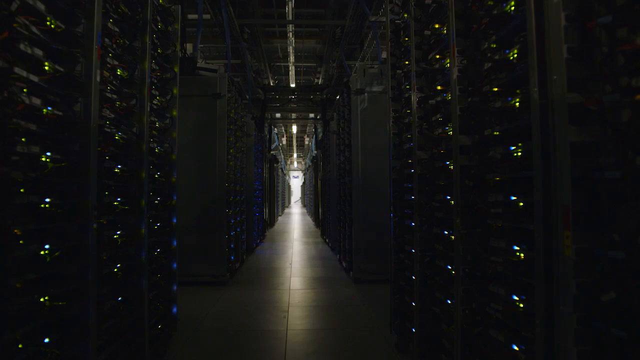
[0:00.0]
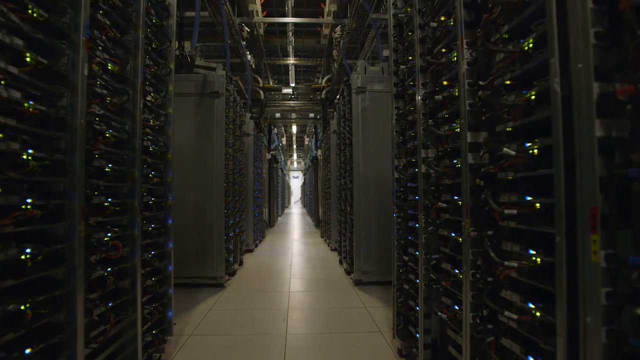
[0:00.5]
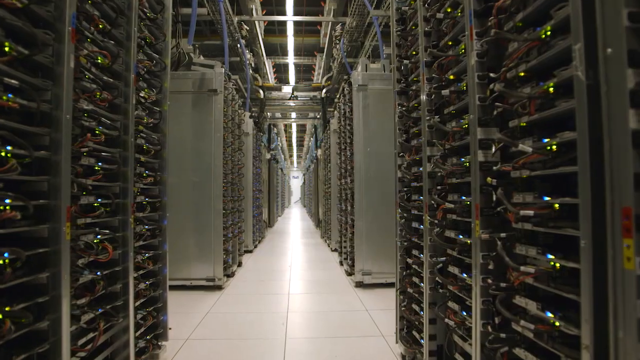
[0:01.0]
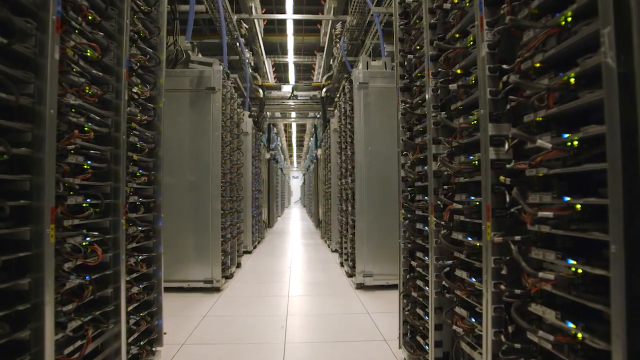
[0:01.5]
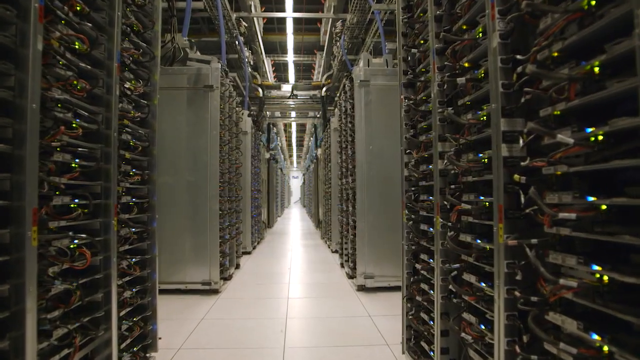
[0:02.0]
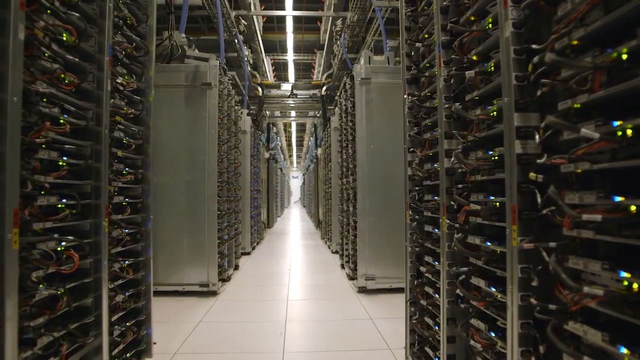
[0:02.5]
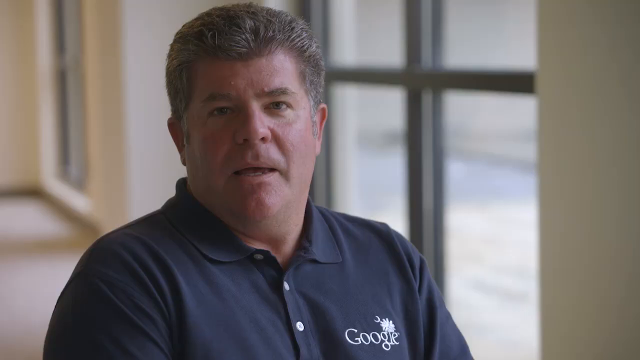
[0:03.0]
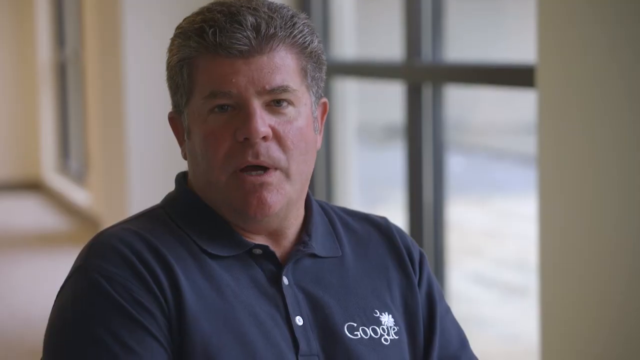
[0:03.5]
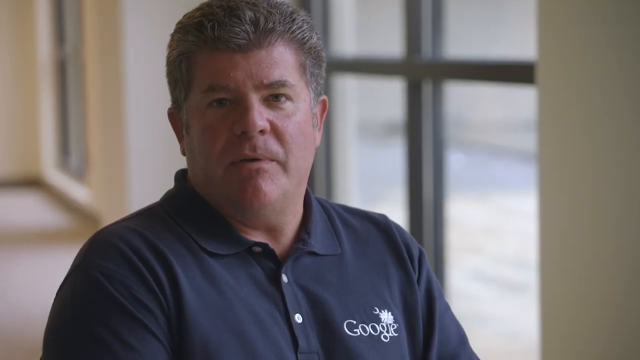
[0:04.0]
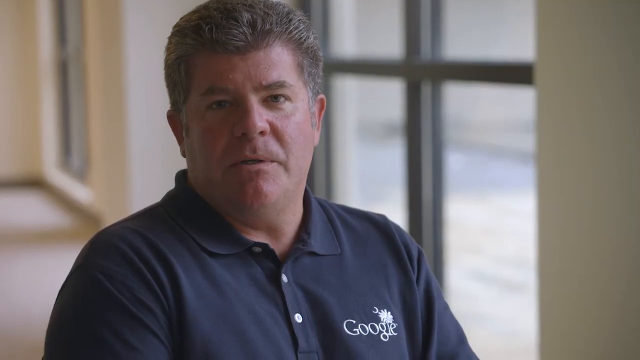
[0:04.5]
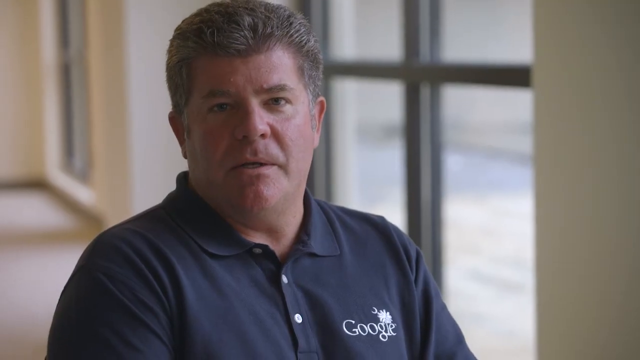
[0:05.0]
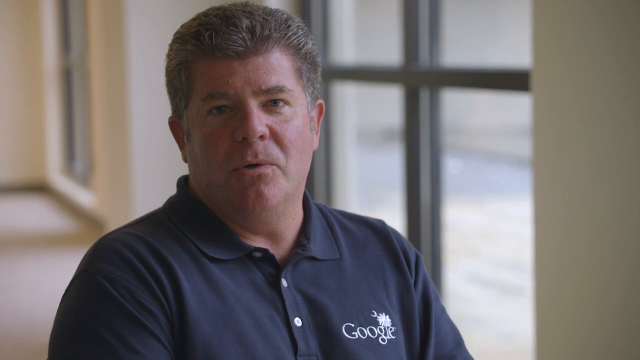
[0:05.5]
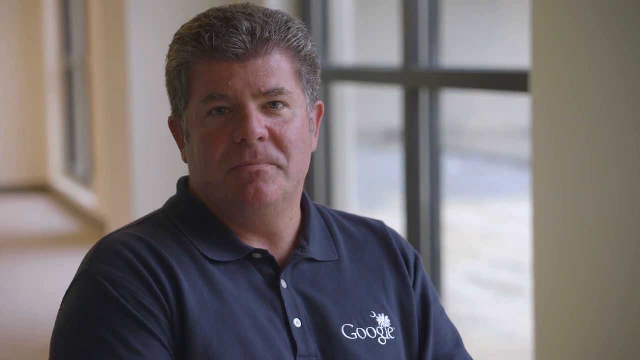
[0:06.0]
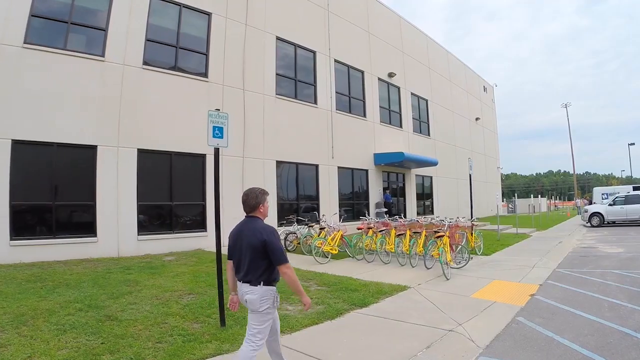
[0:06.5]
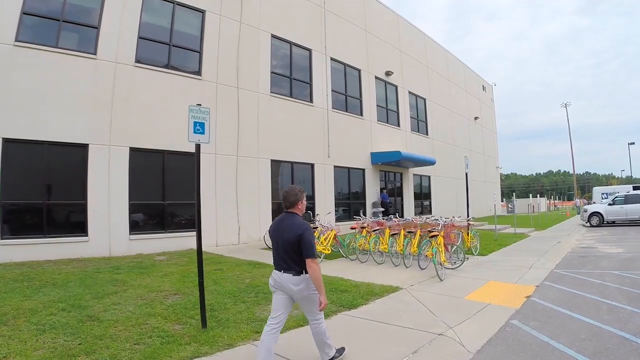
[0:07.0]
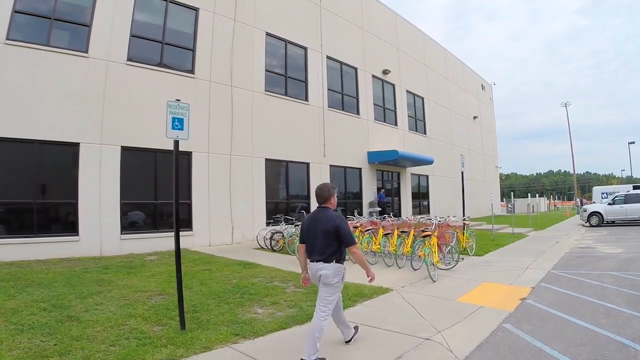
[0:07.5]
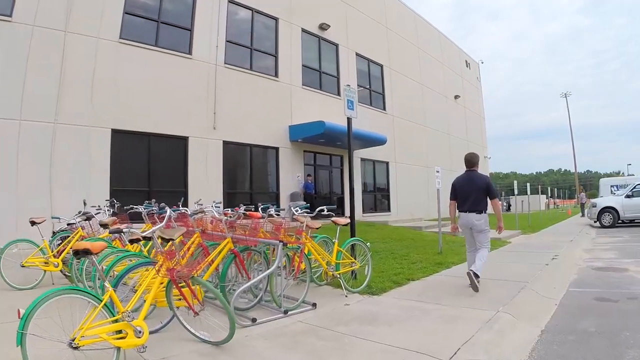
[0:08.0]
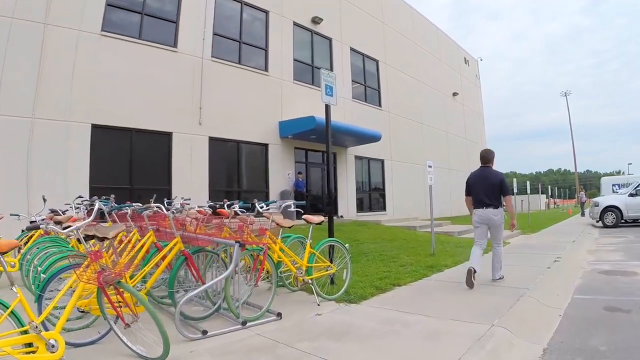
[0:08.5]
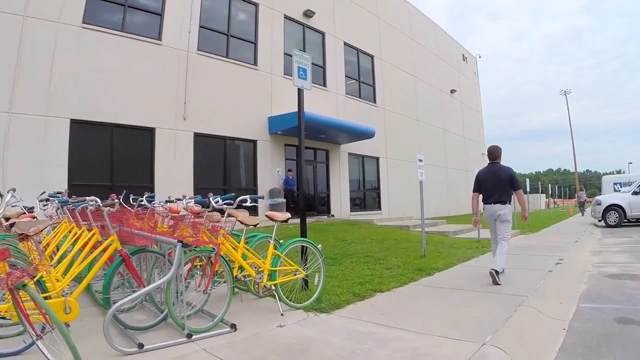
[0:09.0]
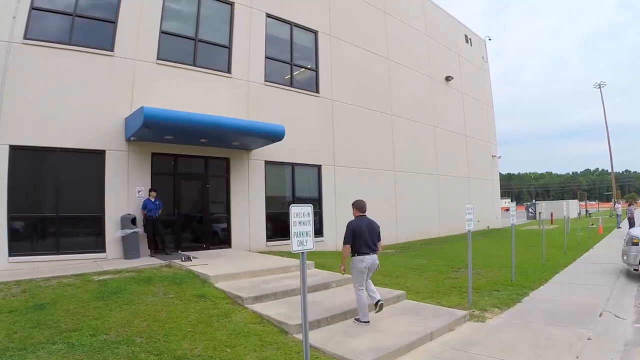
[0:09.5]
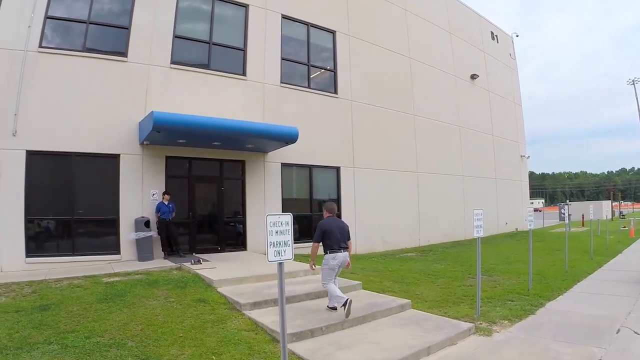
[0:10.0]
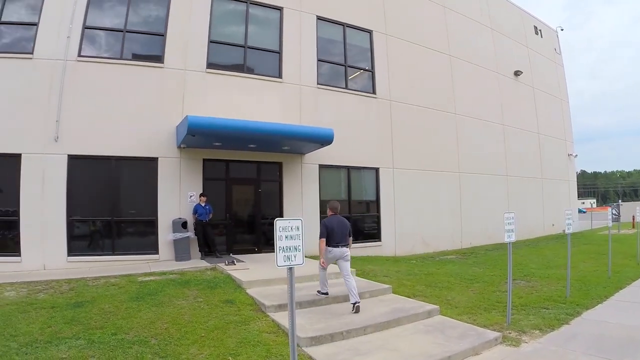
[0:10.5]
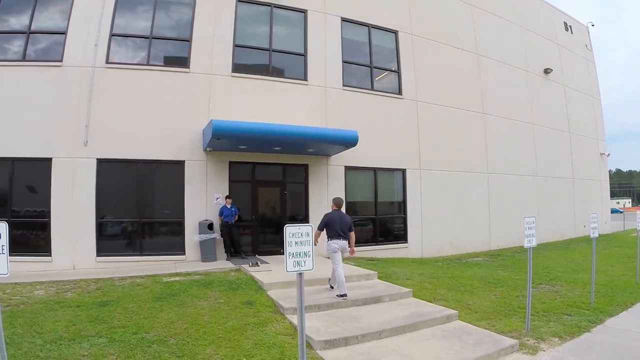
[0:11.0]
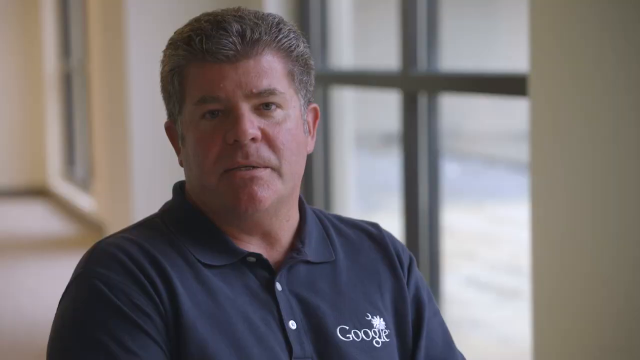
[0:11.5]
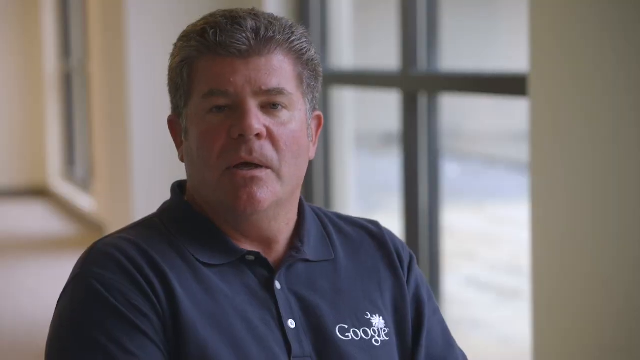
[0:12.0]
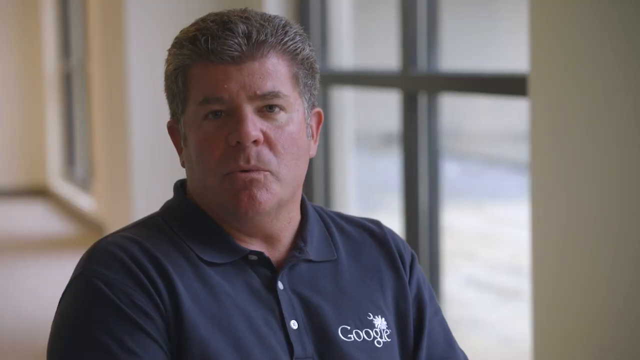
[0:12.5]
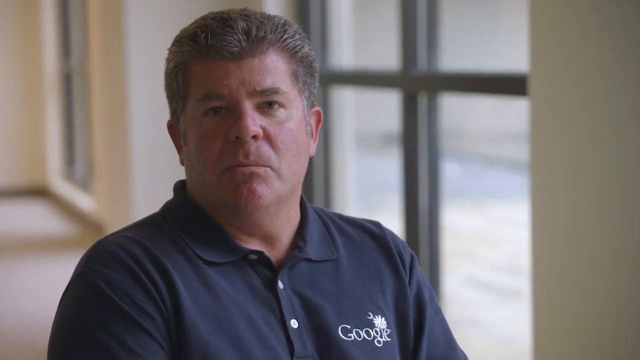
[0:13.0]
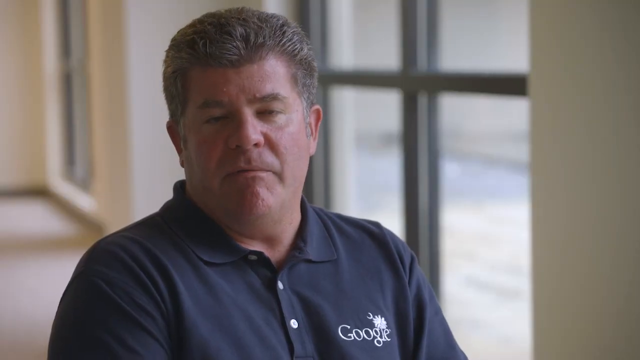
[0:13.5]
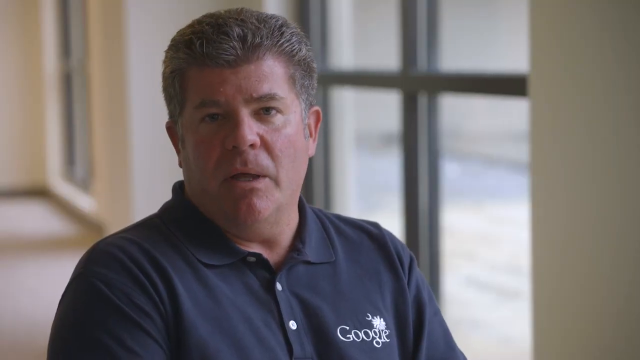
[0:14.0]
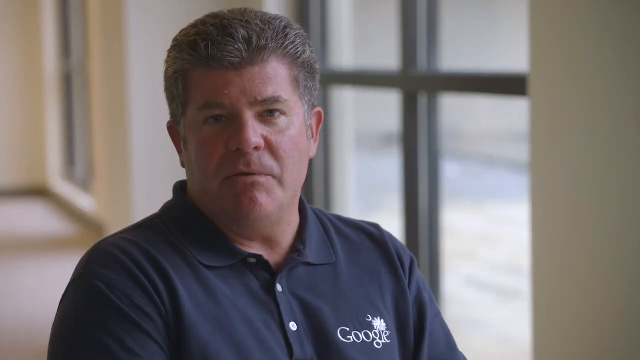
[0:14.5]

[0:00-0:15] A man who evidently works at Google talks while walking around, showing buildings filled with what look like modems and wires, apparently hundreds or thousands of them. Employees work at their computers, and everything looks very high-tech. A high-security facility of some sort appears, where cars have to be let in with a monitor and a gate. The doors have signs on them saying that only one person at a time can enter, and there is a lot of security.